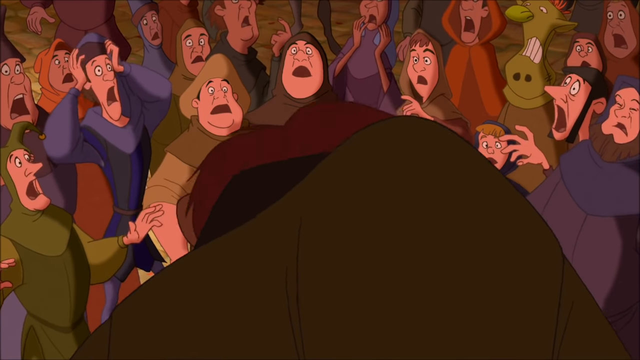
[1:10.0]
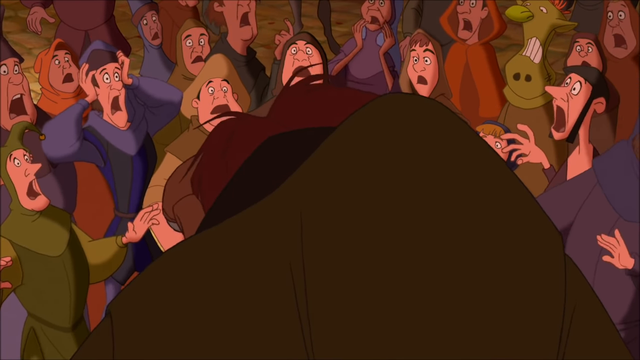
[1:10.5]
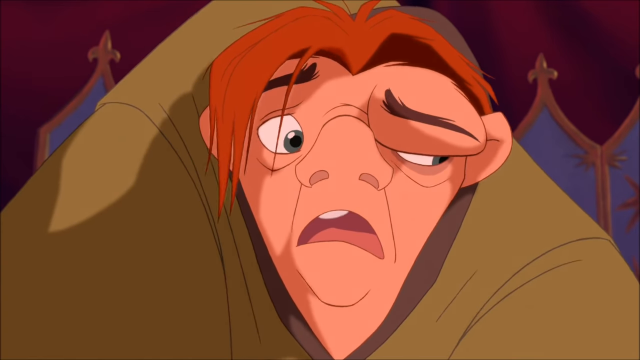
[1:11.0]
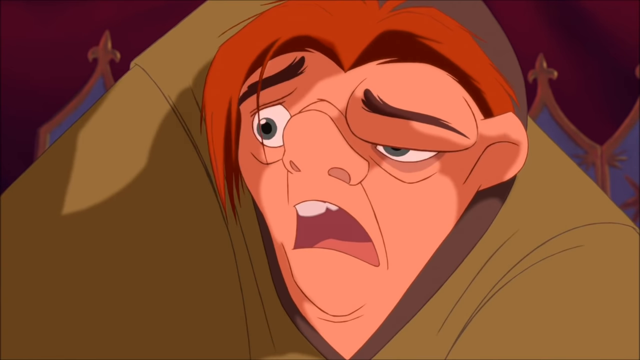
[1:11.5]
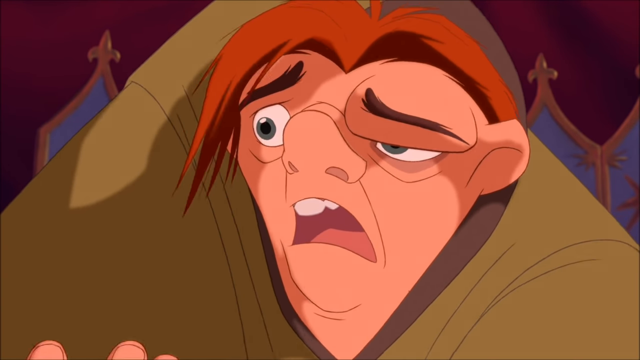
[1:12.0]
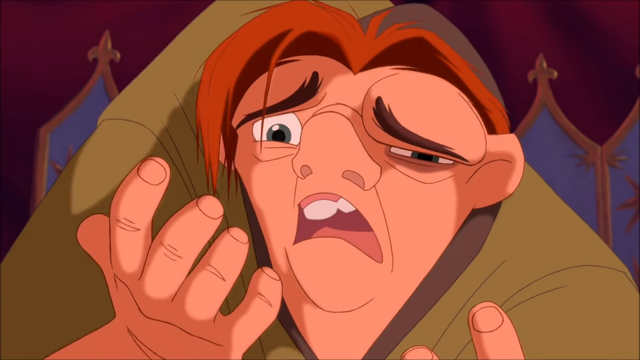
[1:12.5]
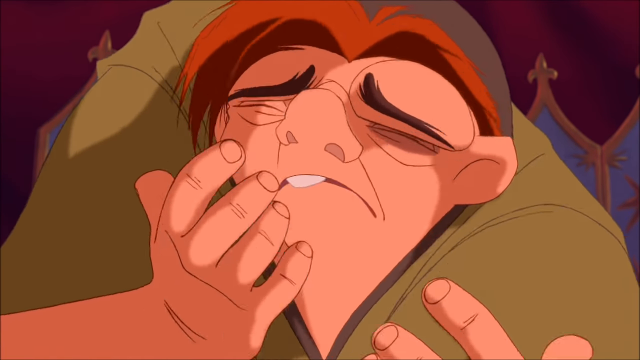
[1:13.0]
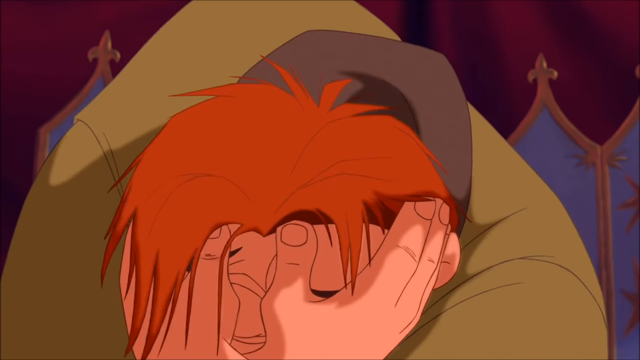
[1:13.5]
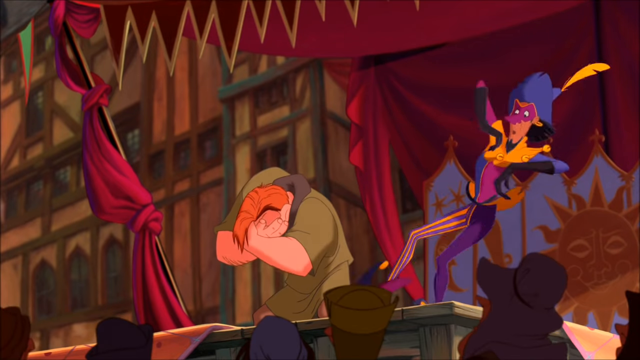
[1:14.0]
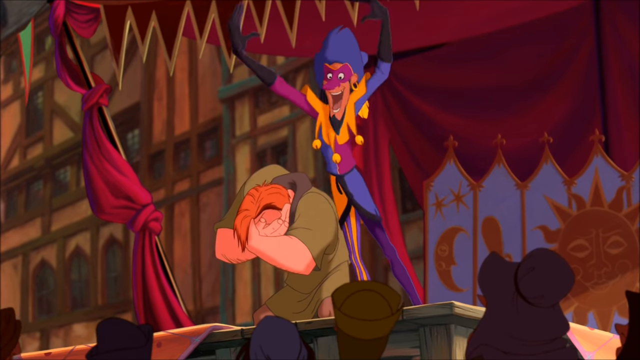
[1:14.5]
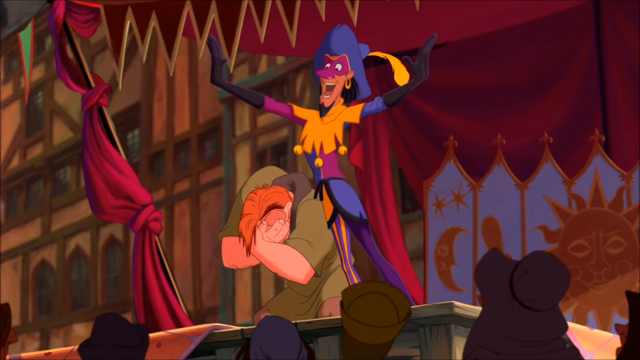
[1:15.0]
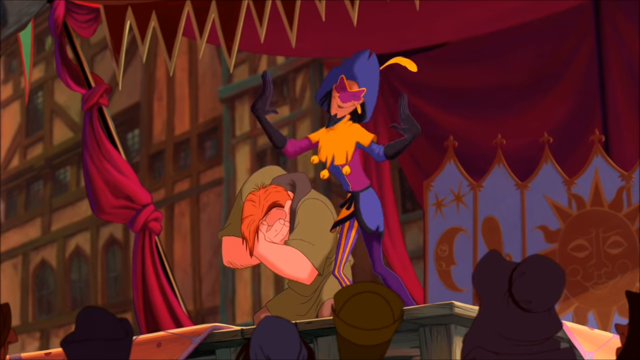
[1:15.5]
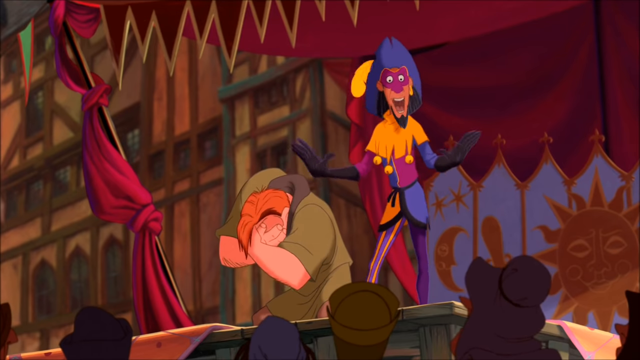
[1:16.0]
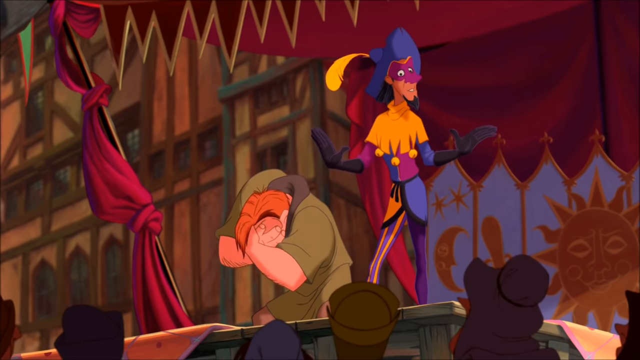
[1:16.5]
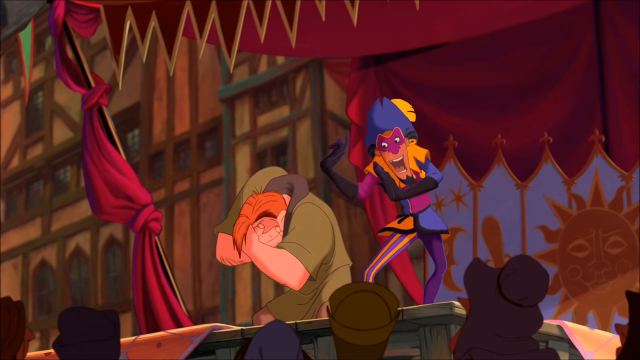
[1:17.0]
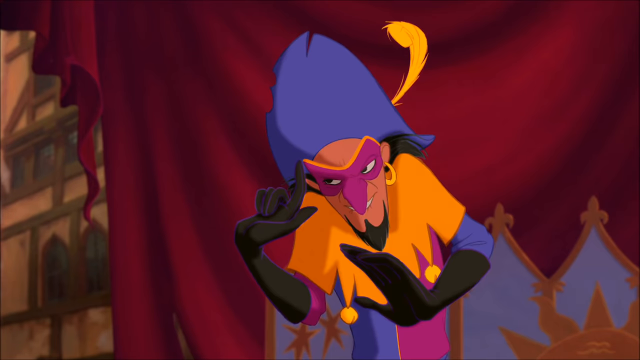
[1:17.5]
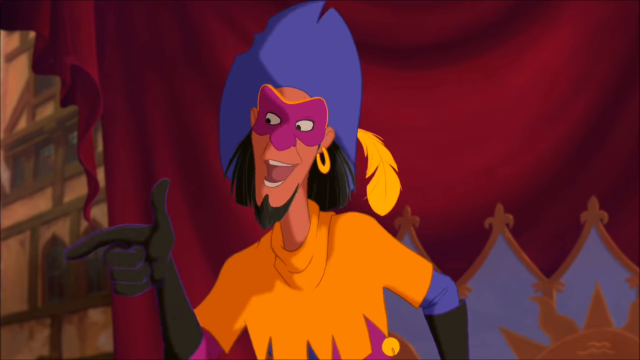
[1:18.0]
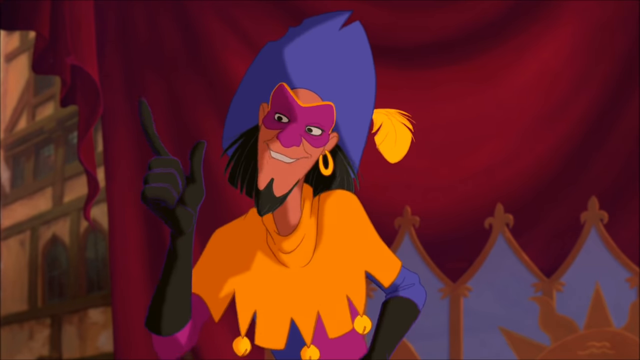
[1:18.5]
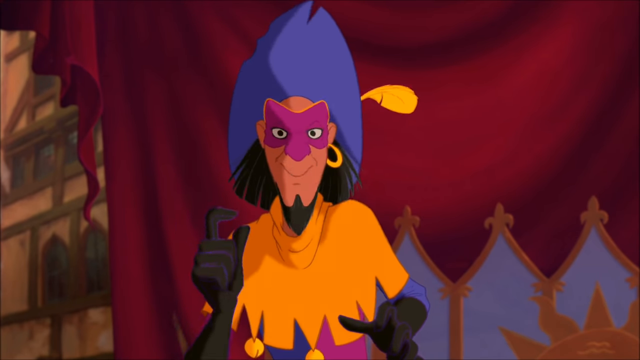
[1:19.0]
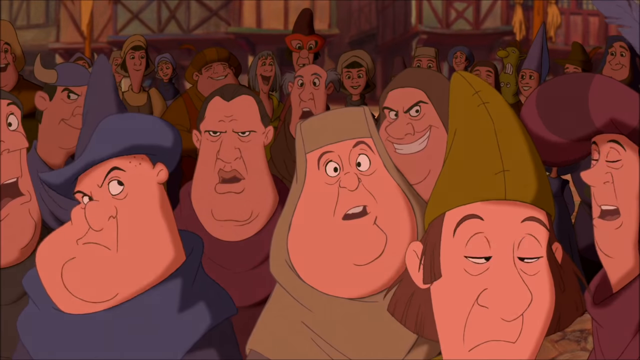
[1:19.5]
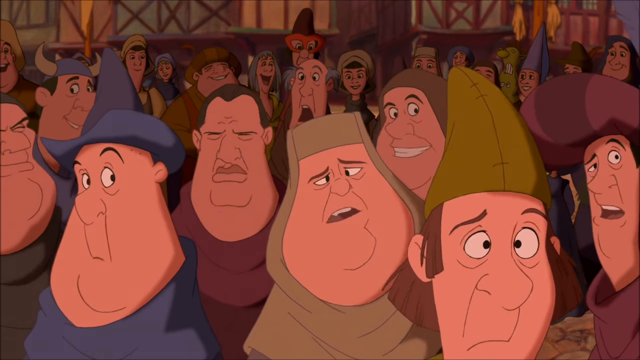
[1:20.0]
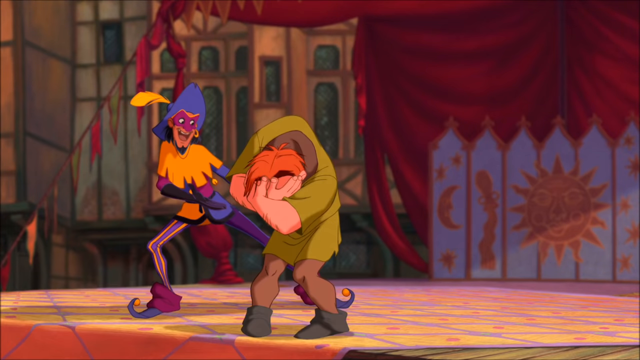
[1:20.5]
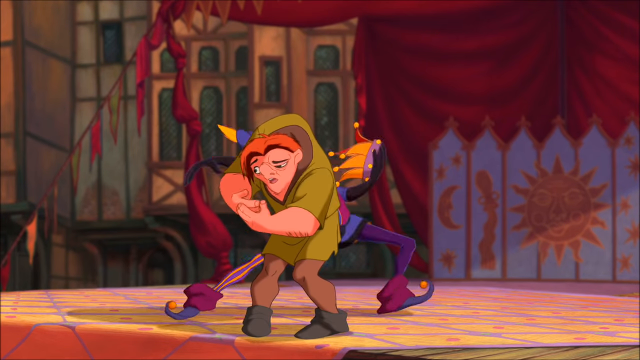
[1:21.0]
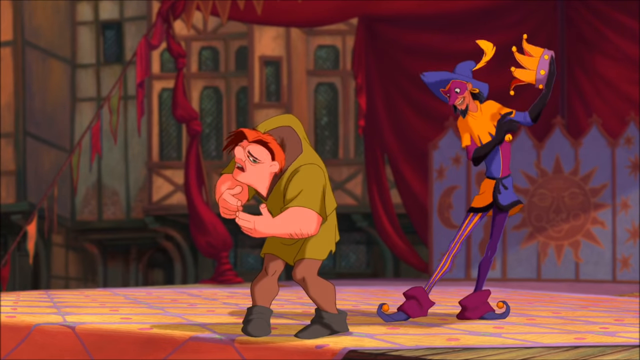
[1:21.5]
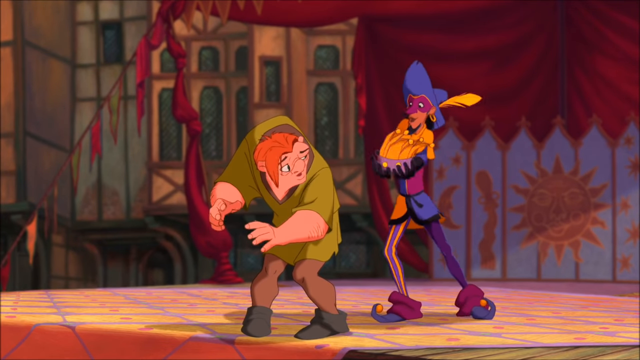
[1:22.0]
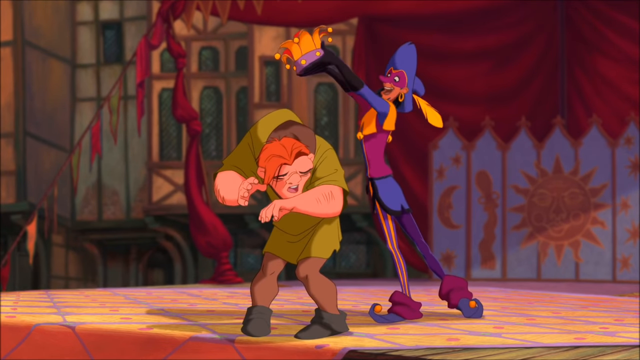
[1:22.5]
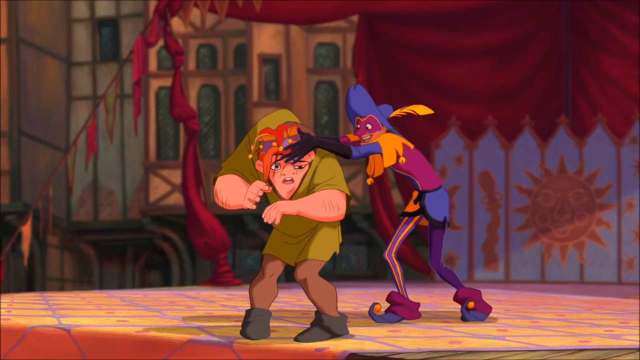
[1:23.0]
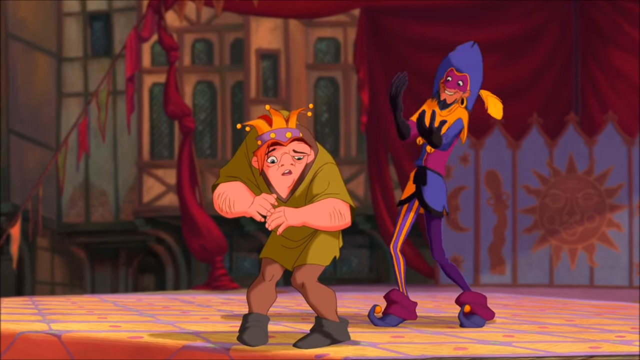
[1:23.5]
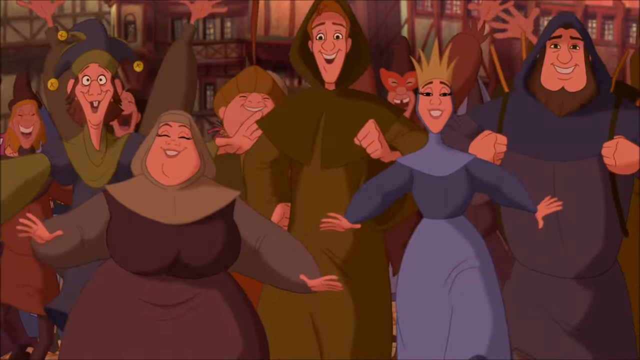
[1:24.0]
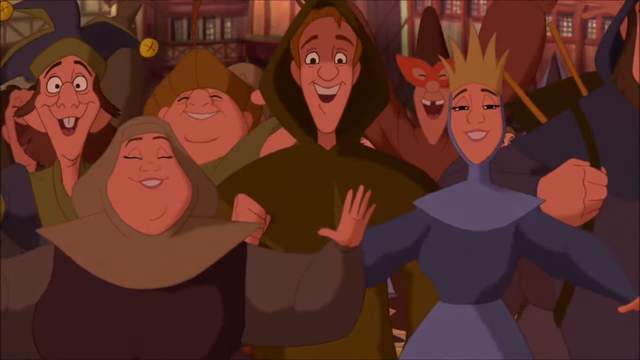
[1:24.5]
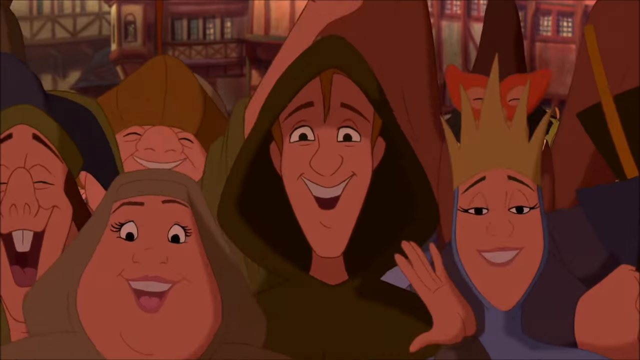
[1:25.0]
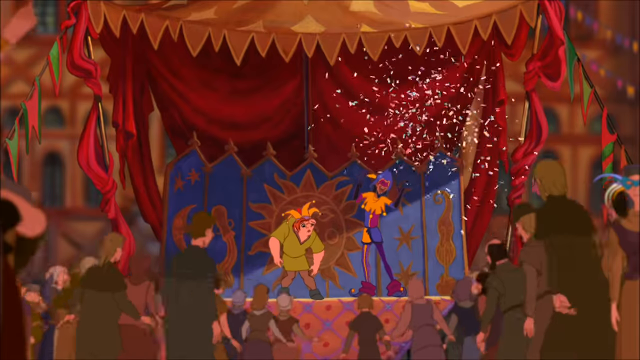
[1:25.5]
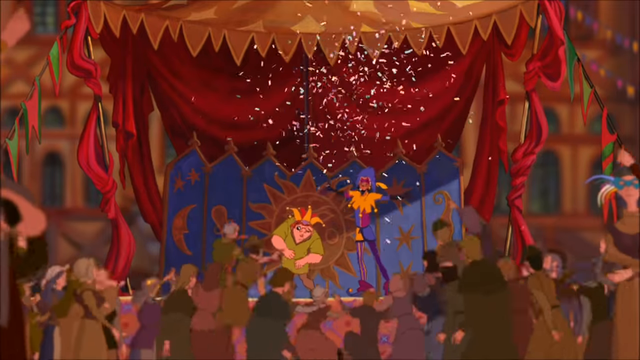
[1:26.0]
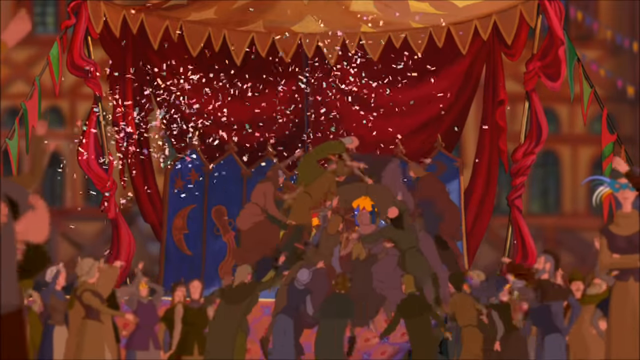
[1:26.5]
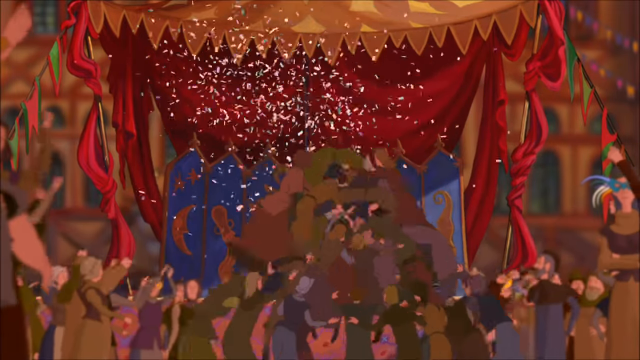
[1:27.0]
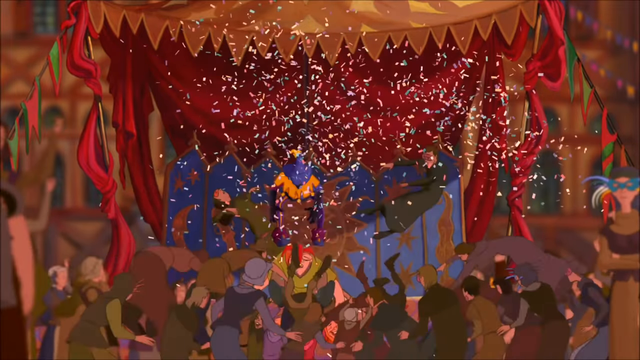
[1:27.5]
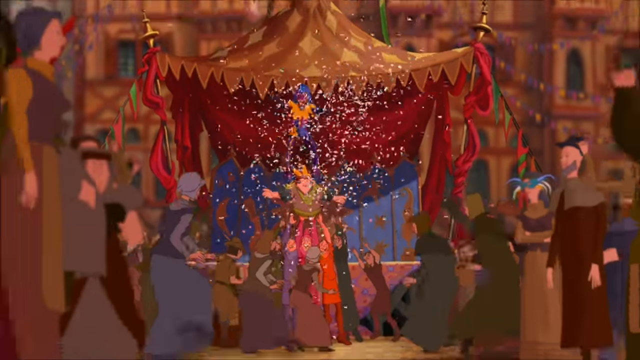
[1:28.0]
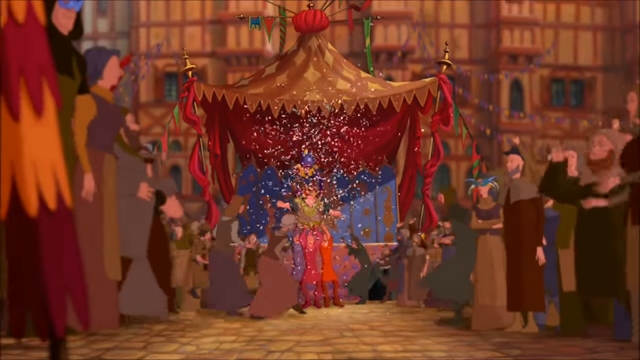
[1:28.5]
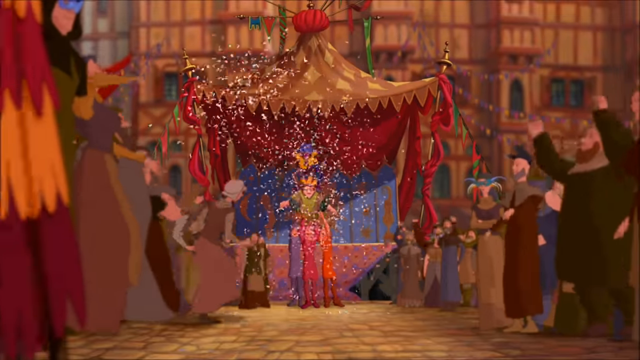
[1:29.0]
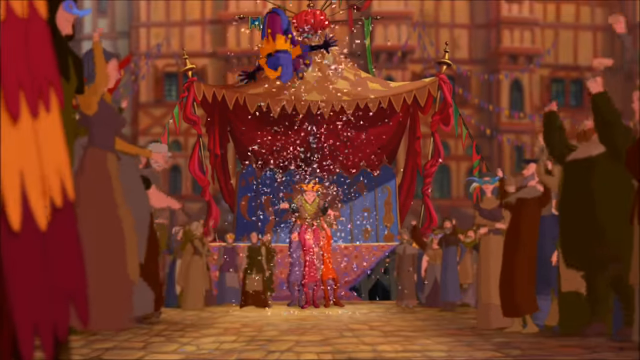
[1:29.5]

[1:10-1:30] The view shows the hunchback, whose face the woman just tried to pull off like the headdresses of the others, revealing it is his real face. The jester stands next to the man, who has a very sad expression, and makes wild gestures behind him, maybe trying to mollify the crowd. People react with some disappointment. After some interaction between them, the jester puts a crown on the hunchback's head, apparently naming him the King of Fools, so that he is both celebrated and made fun of. The crowd smiles broadly; some laugh, some just smile, and they jump up and down. Confetti falls from the ceiling onto the new king. The green-clad hunchback stands on the stage wearing his crown, arms raised in triumph.